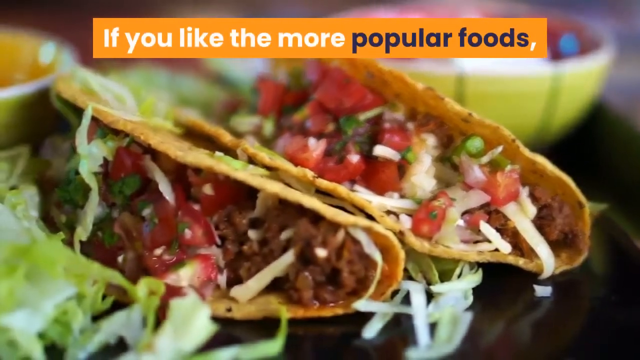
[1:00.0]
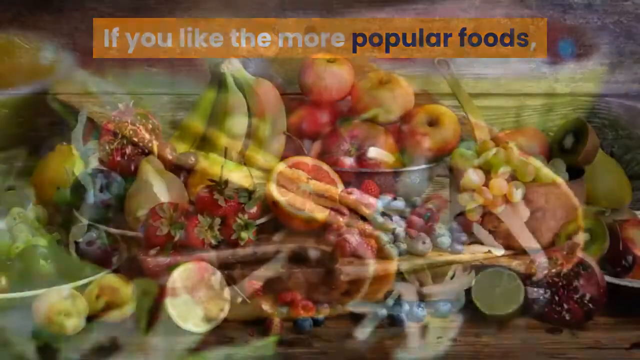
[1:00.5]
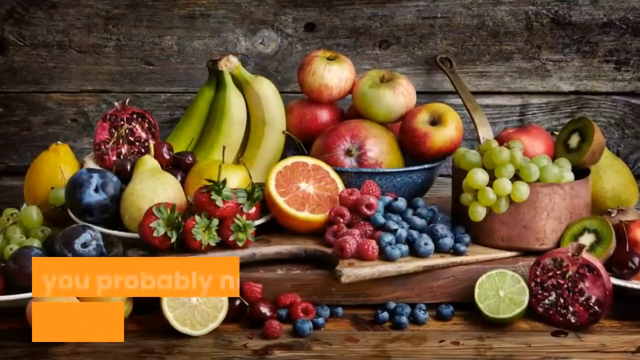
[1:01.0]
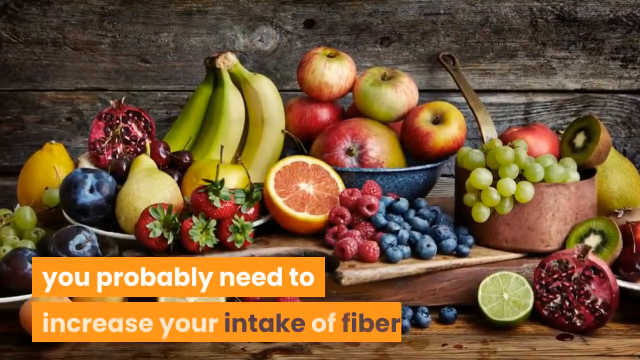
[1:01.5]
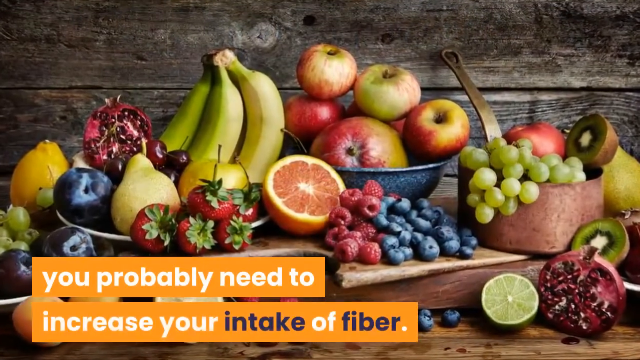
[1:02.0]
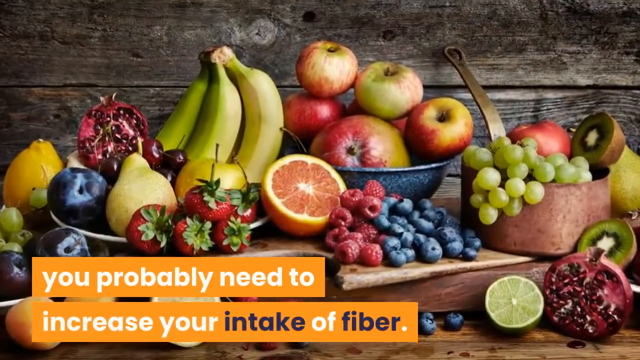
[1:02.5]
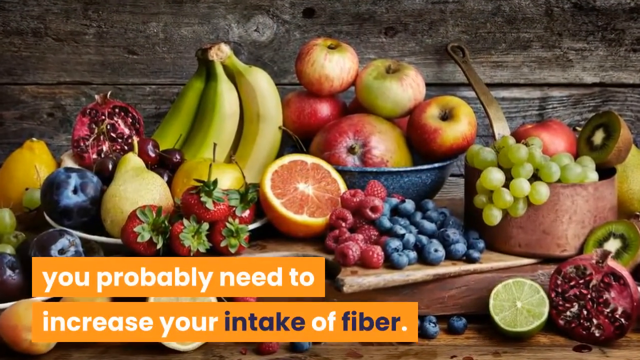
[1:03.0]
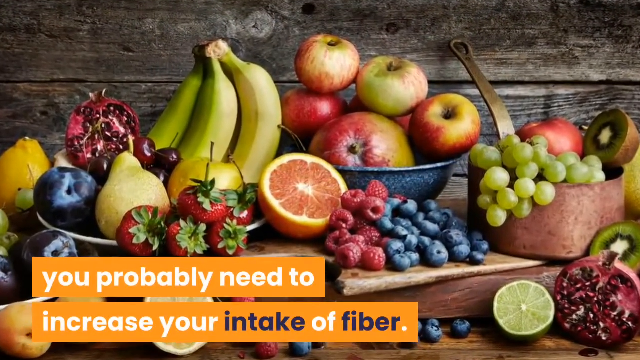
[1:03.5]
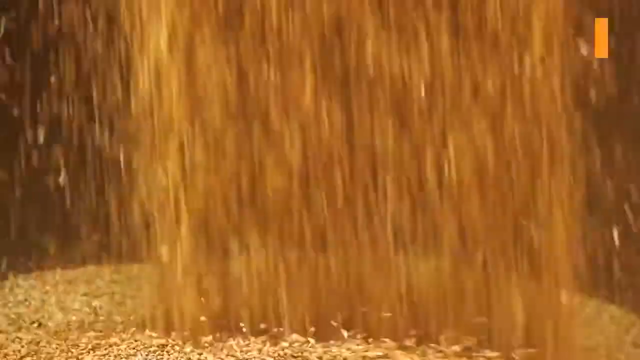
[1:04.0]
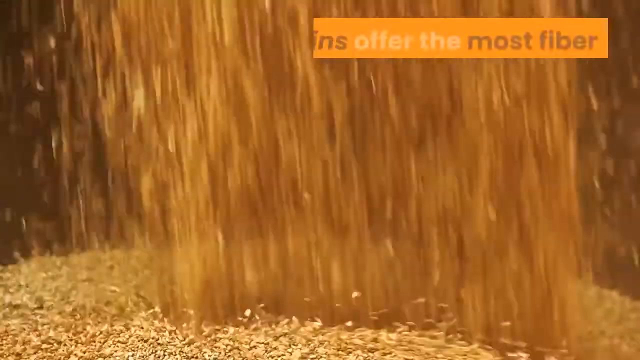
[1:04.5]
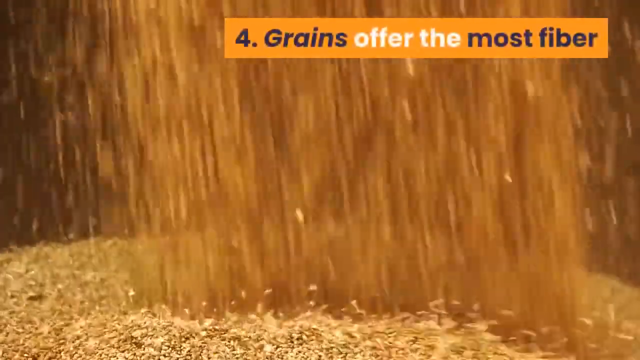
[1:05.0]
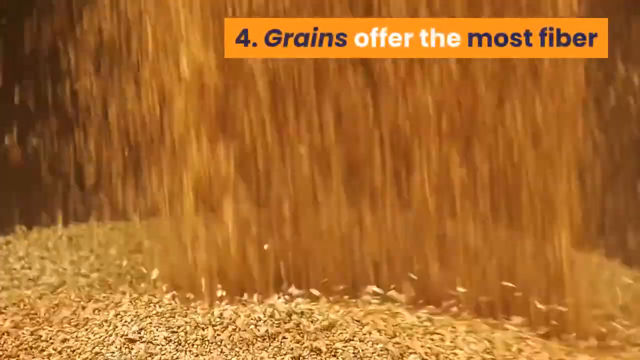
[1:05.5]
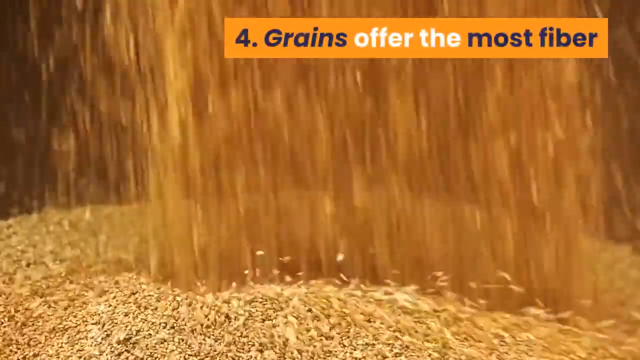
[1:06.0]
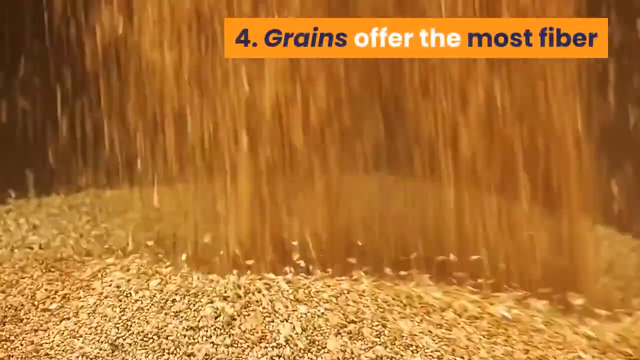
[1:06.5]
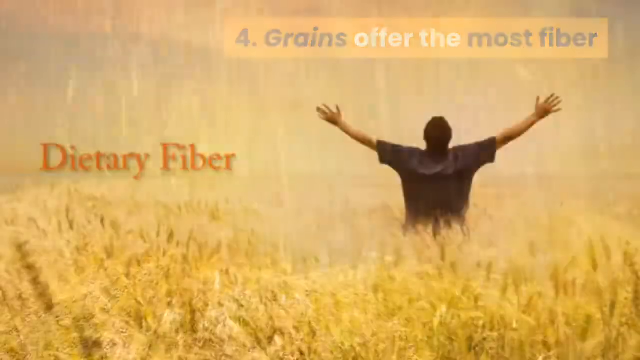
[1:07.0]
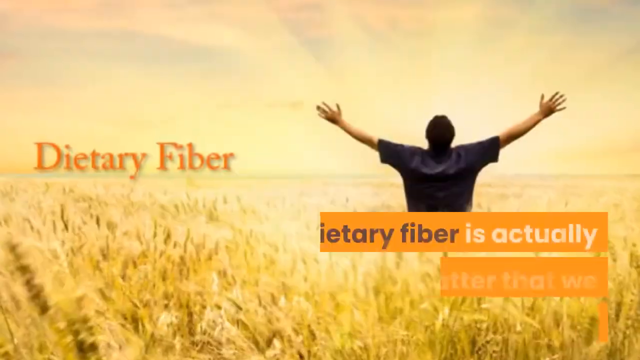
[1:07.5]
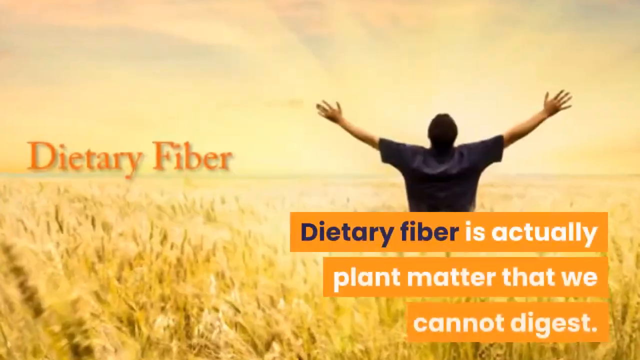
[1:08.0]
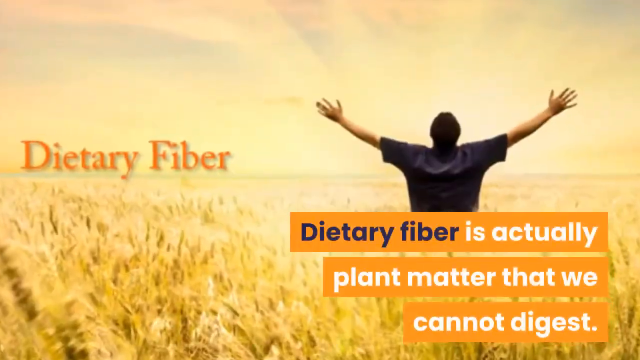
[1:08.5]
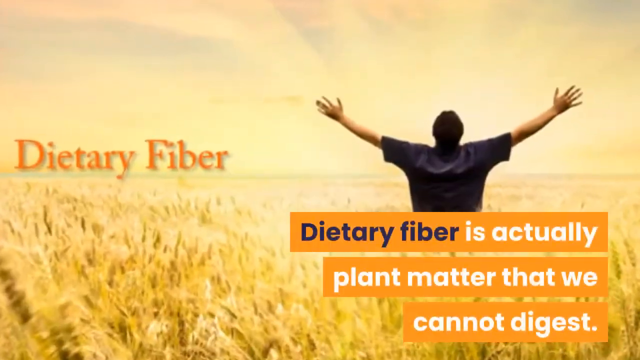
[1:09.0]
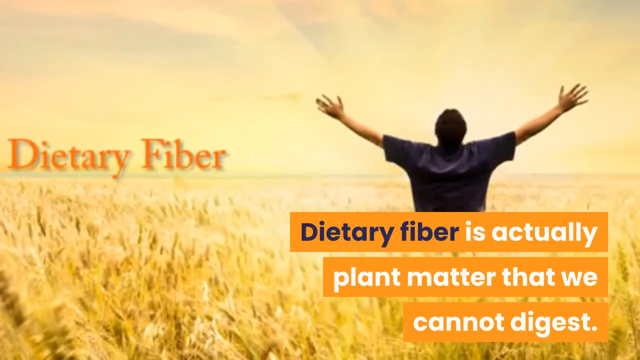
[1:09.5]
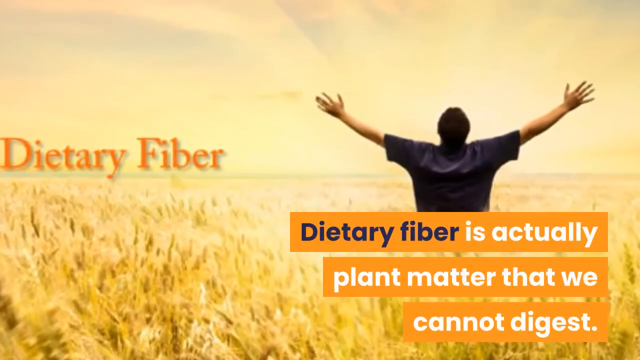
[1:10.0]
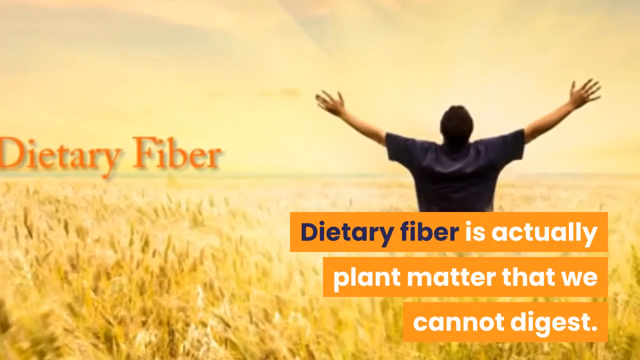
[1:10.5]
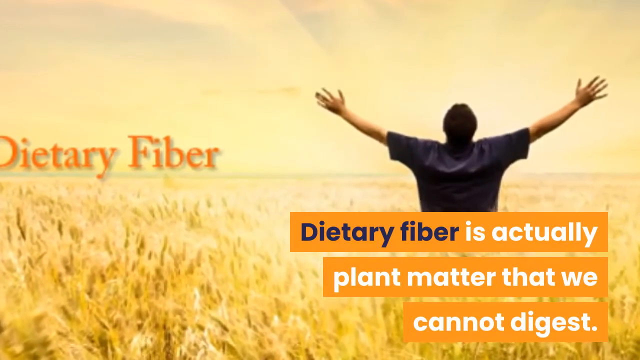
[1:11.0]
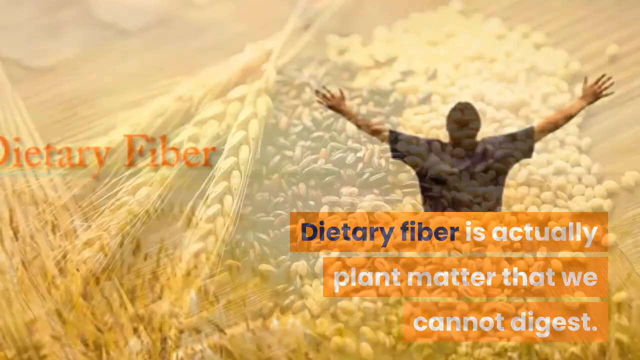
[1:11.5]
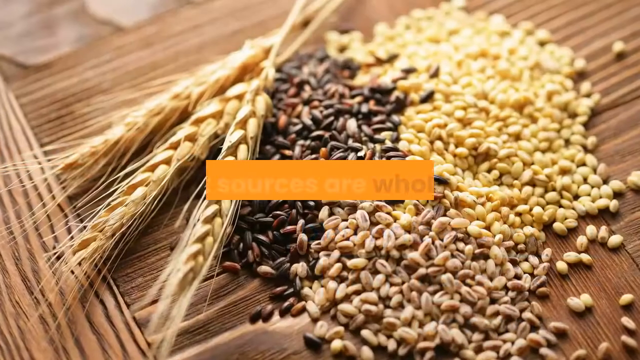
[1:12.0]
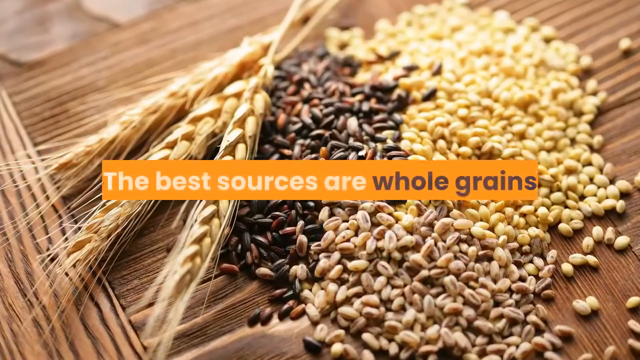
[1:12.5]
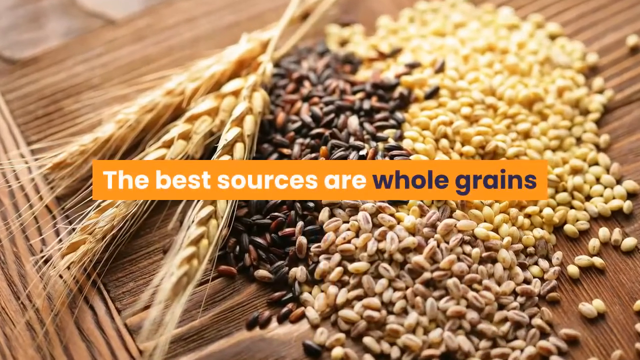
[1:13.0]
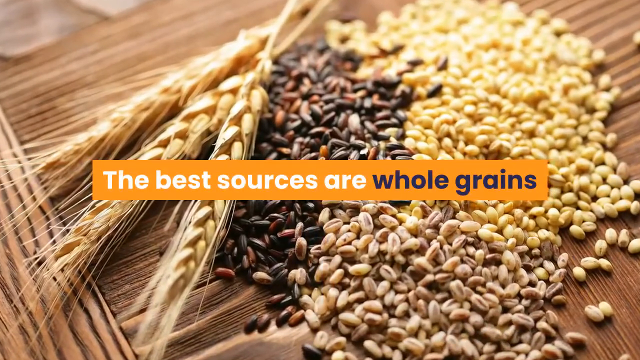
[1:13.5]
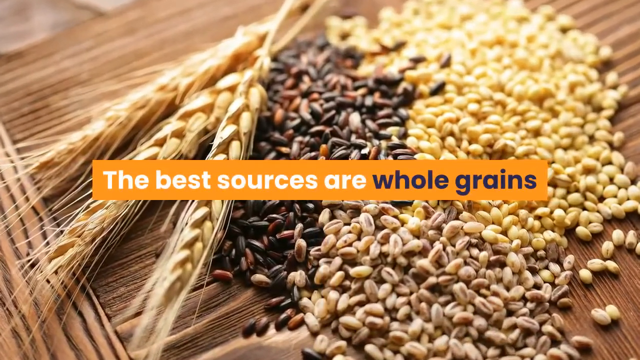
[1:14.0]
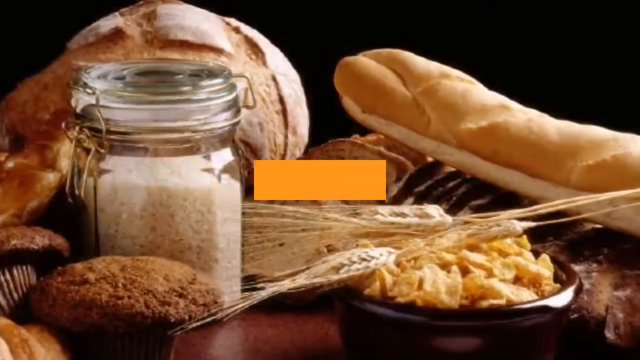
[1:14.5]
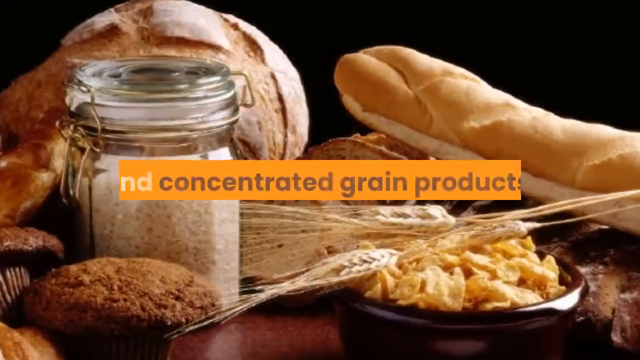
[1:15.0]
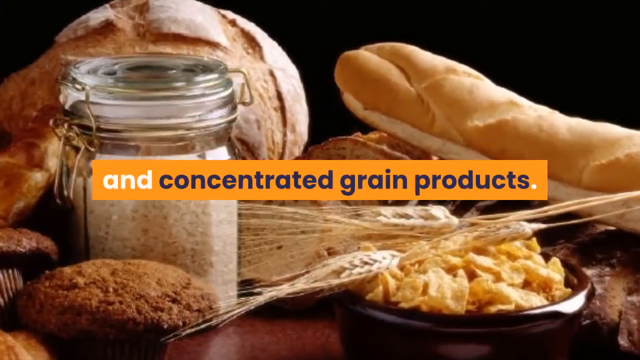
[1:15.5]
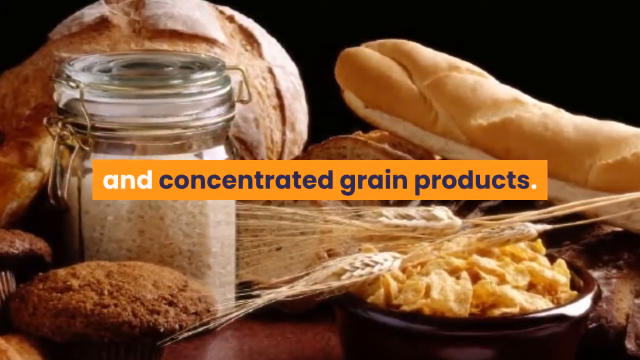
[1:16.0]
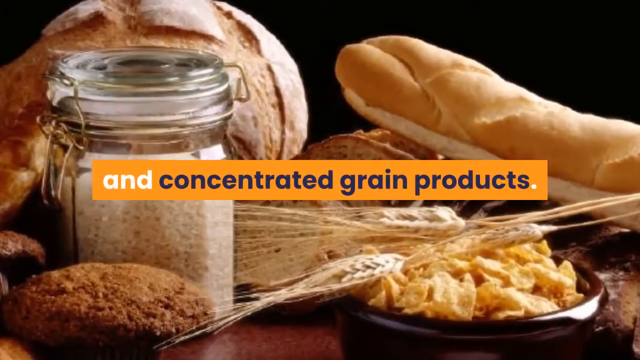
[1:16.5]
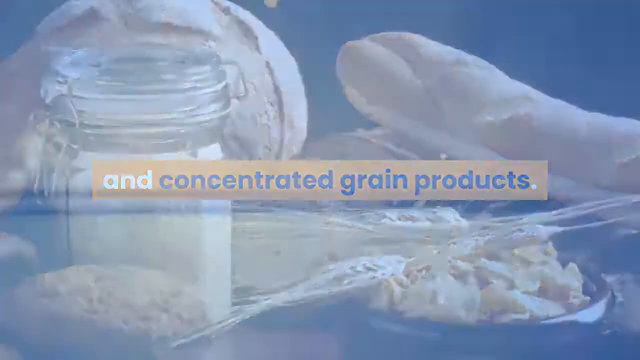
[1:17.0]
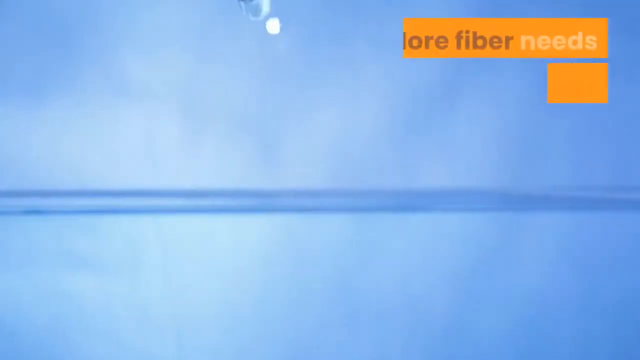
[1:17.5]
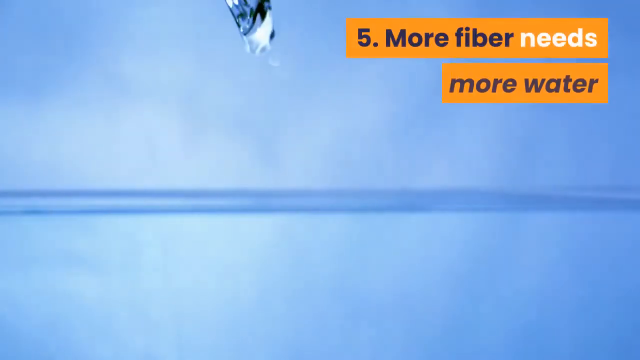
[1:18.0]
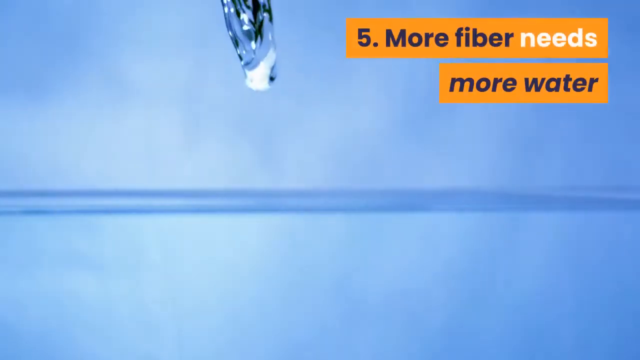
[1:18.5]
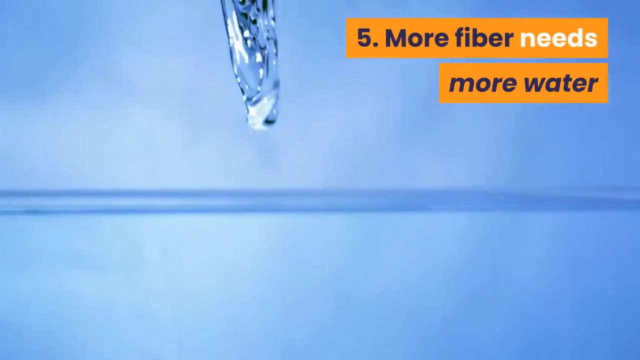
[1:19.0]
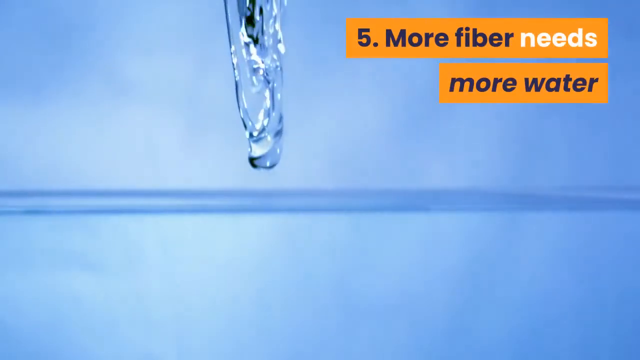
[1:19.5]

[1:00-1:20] Tacos are lying on a plate, looking packed with a lot of vegetables as well as cheese and meat. It cuts to a slide reading "You probably need to increase your intake of fiber," showing a table filled with different colored fruits: bananas, pears, strawberries, grapefruit, apples and kiwis. Next is what looks like a video of fiber being dropped into some kind of basin where it is being collected. Another slide reads "Dietary fiber is actually plant matter that we cannot digest."